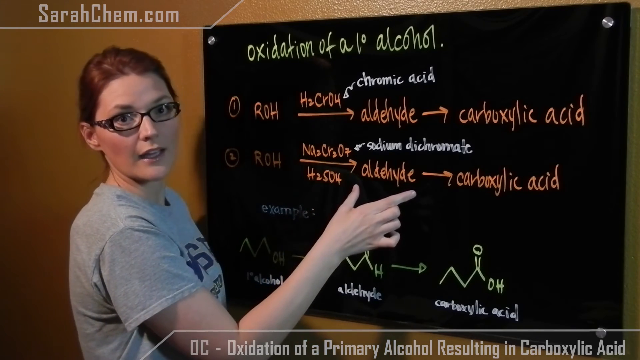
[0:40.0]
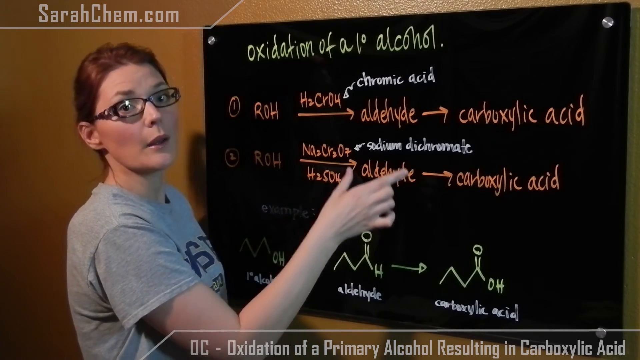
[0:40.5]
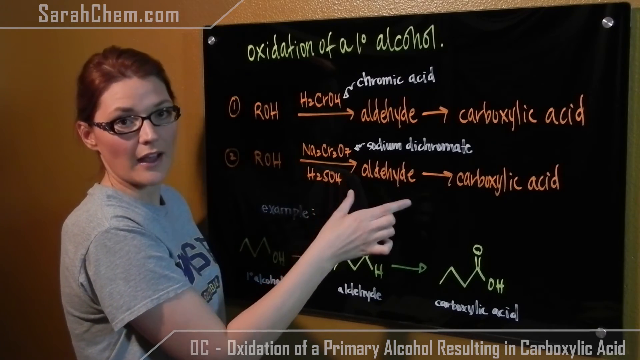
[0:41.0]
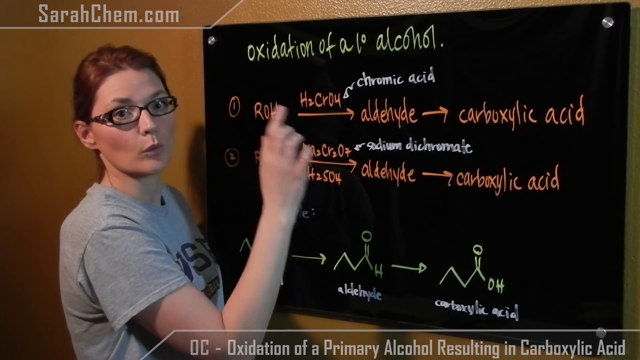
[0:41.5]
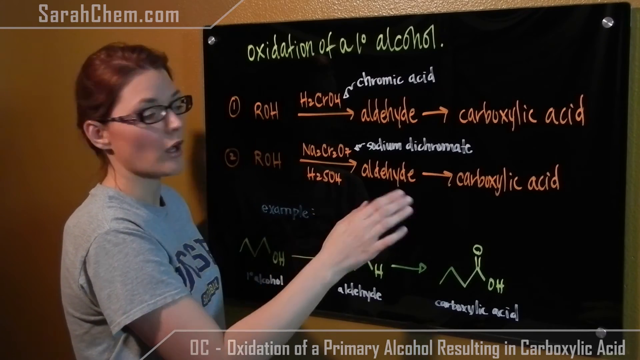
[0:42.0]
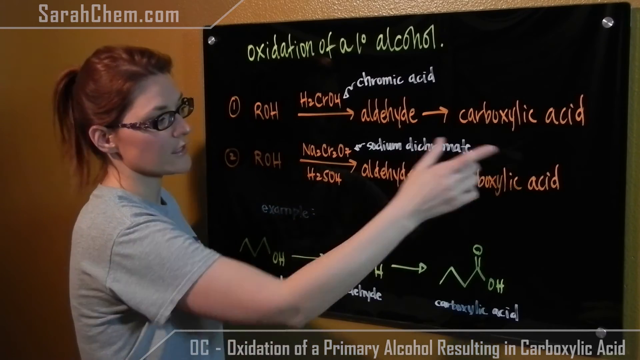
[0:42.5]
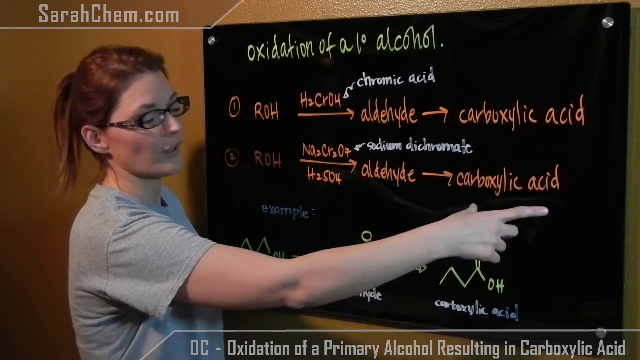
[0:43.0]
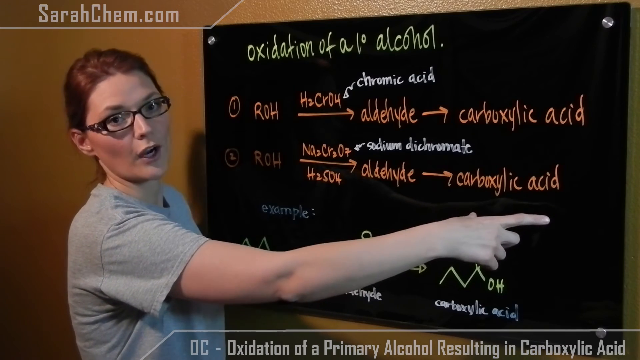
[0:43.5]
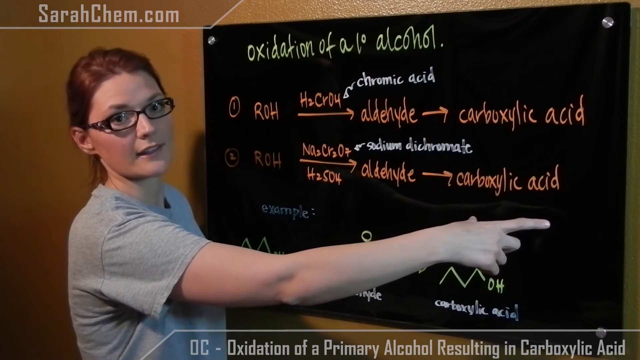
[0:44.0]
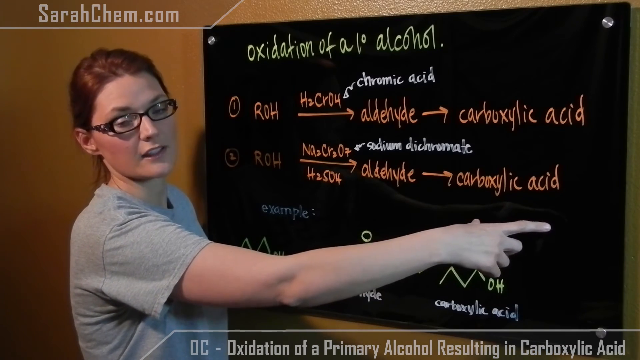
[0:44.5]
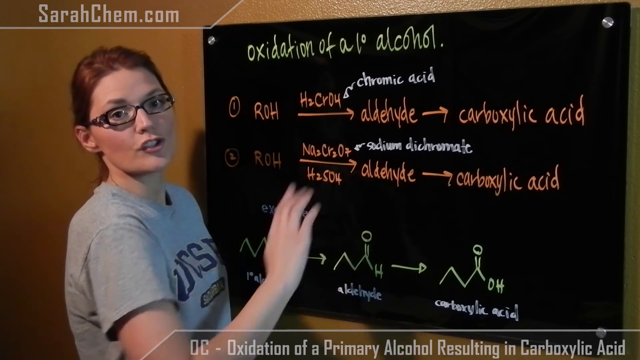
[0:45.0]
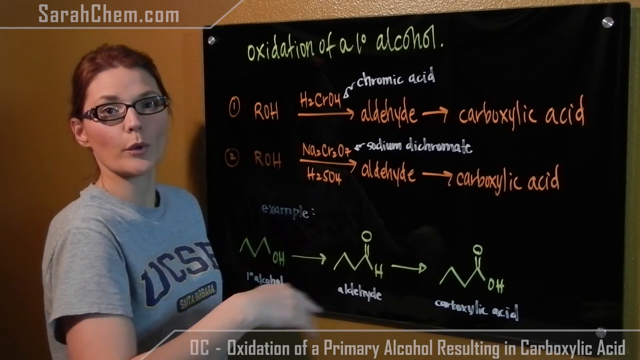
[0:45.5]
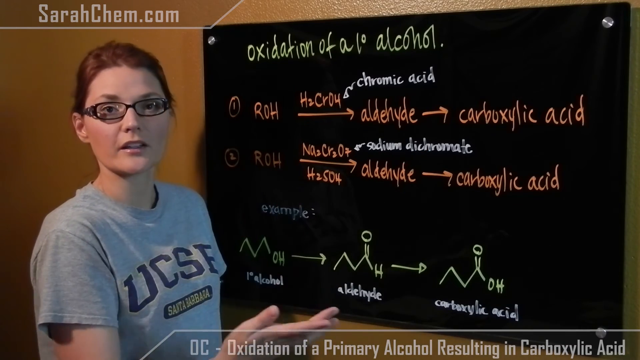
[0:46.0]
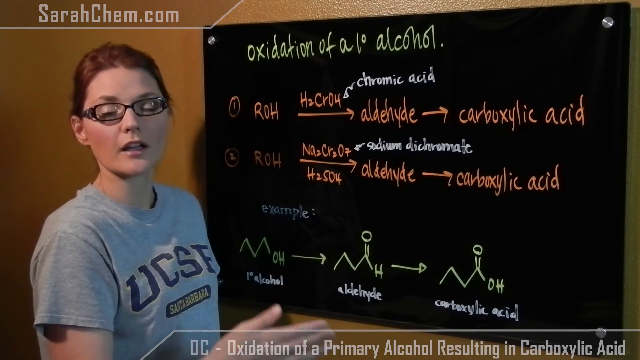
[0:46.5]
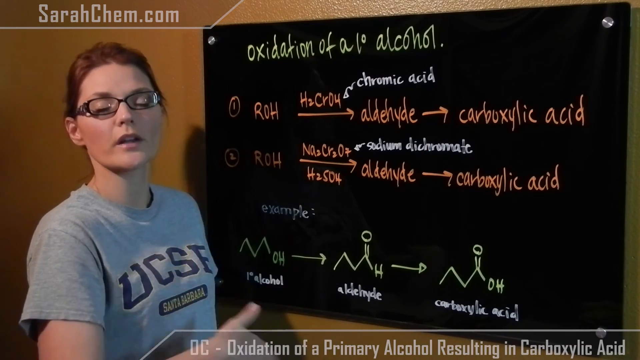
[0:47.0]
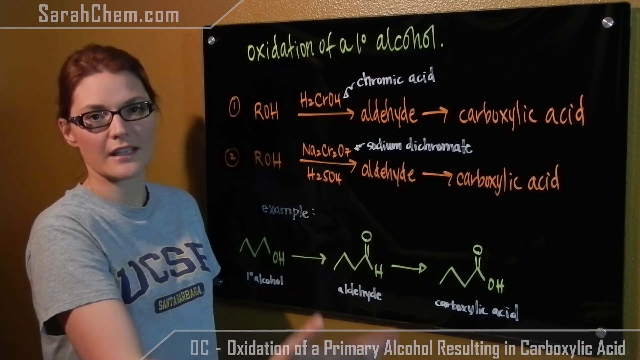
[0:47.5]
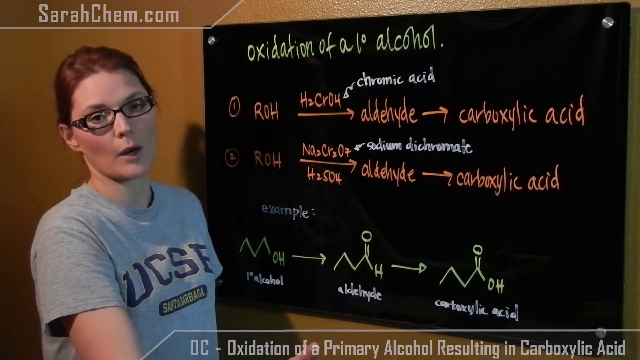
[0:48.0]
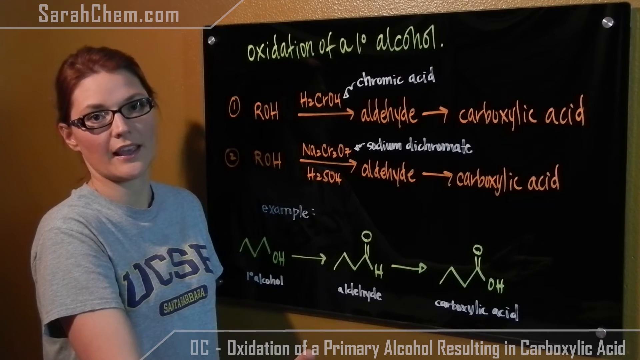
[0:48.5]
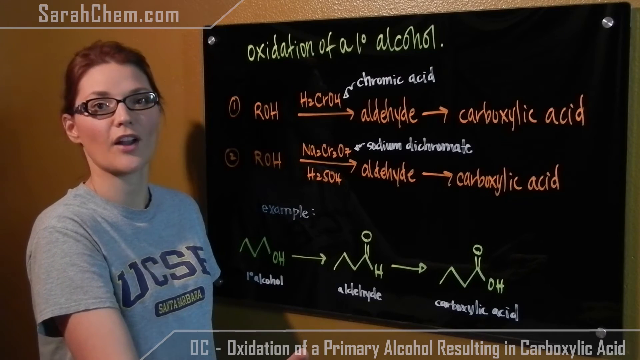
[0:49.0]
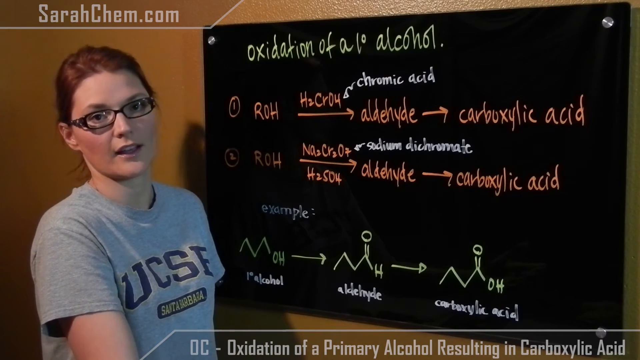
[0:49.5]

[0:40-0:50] "sarahkemp.com" is at the top left, and Sarah is on the left side wearing the grey t-shirt and glasses; her hair is red. On the right is the blackboard with "oxidation of alcohol" written in green chalk and the chemical formulas in orange chalk. Chromic acid and sodium dichromate are in white, and alcohol, aldehyde and carboxylic acid are written in white at the bottom of the board. Sarah continues explaining the oxidation of alcohol. There is an example at the bottom, and a headline at the bottom reads "oxidation of a primary alcohol resulting in carboxylic acid".